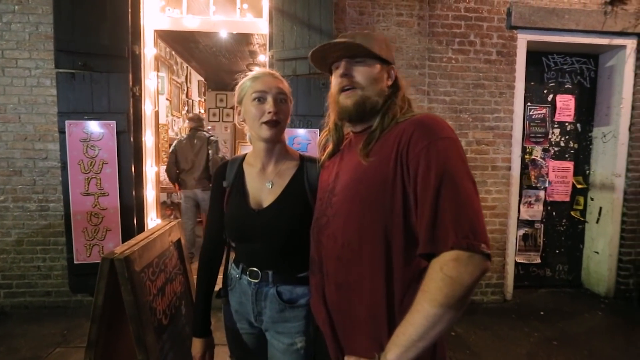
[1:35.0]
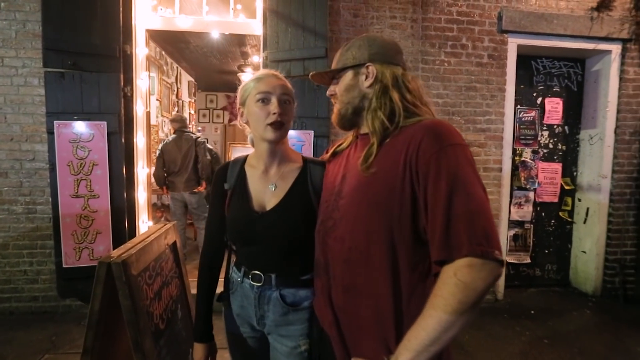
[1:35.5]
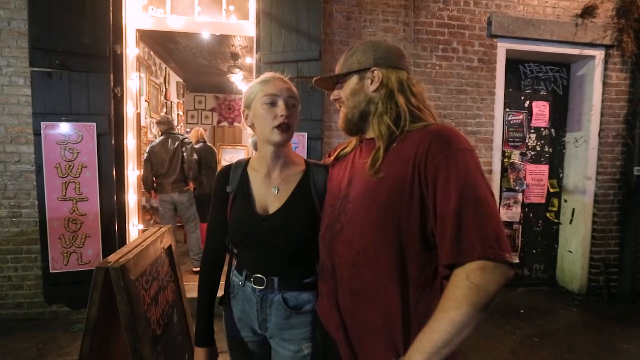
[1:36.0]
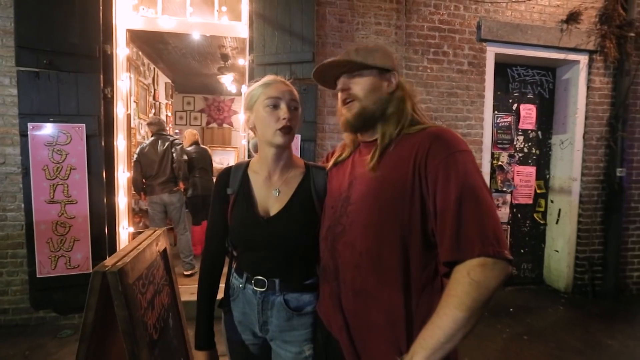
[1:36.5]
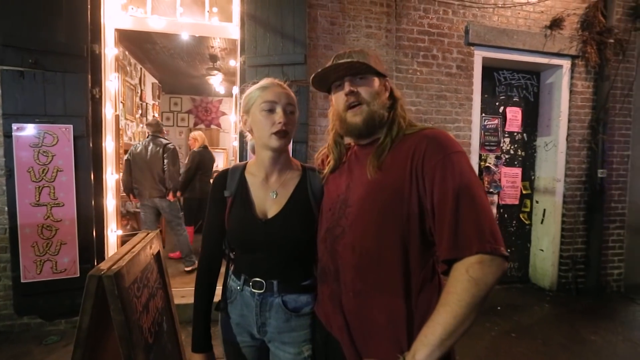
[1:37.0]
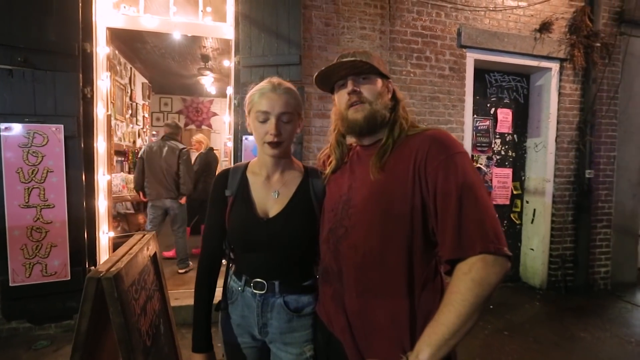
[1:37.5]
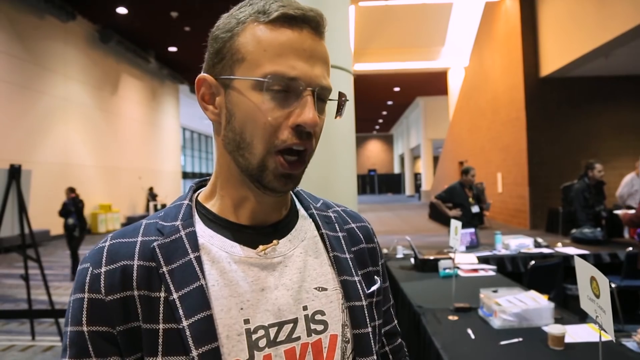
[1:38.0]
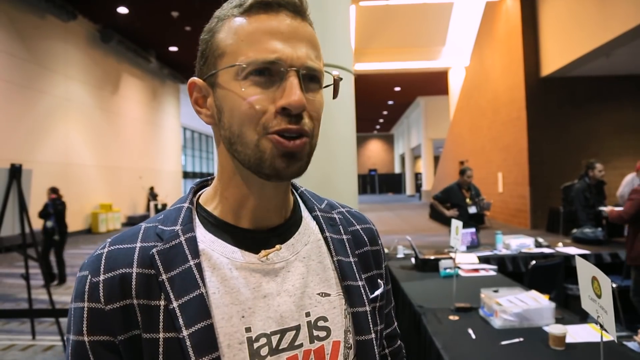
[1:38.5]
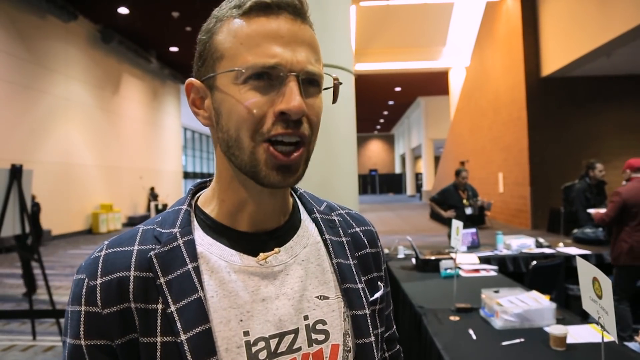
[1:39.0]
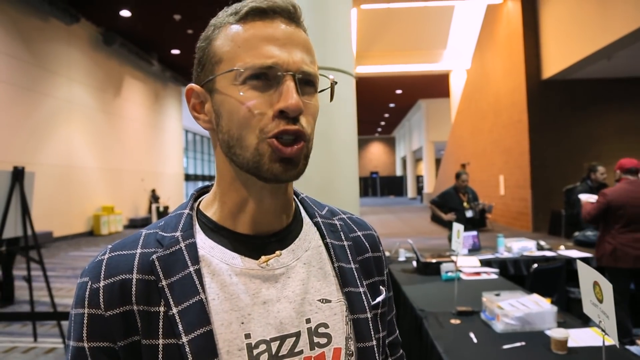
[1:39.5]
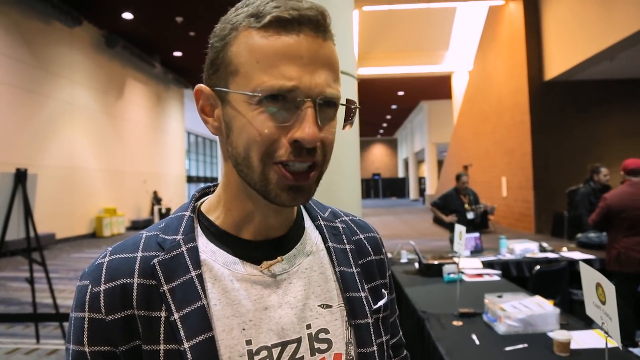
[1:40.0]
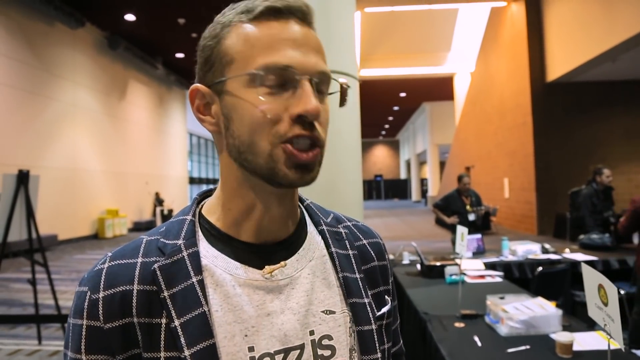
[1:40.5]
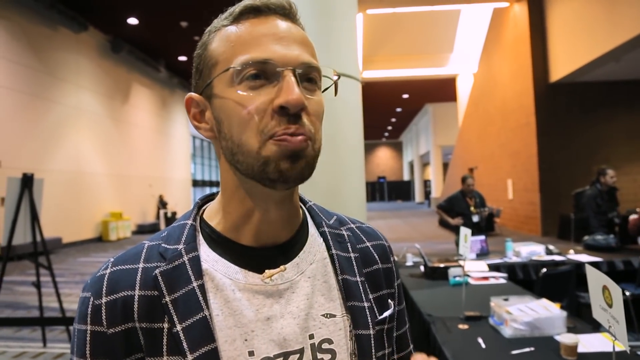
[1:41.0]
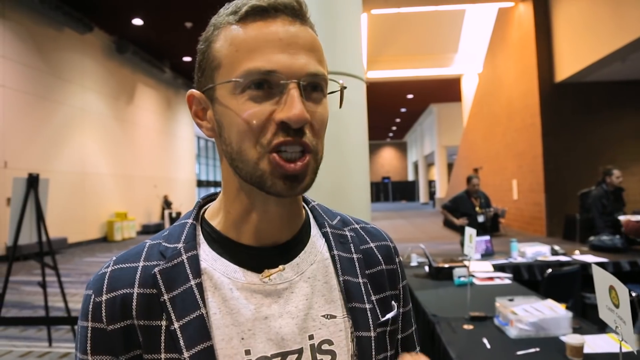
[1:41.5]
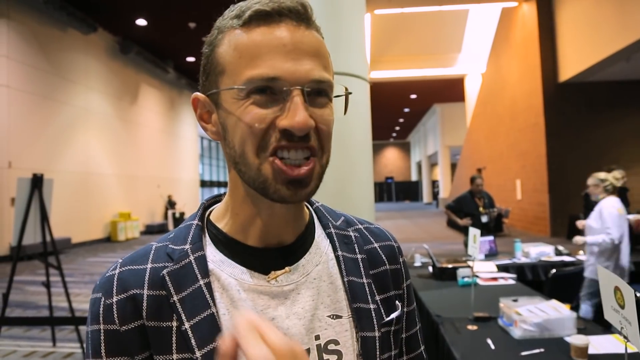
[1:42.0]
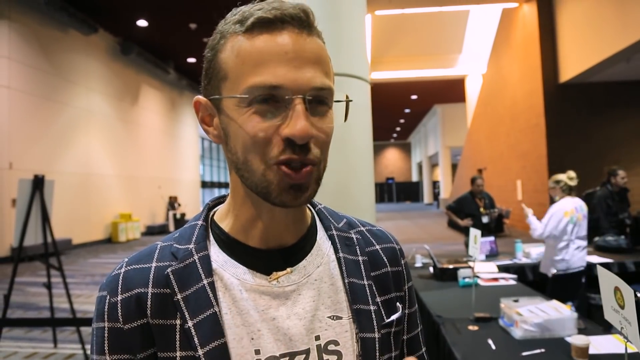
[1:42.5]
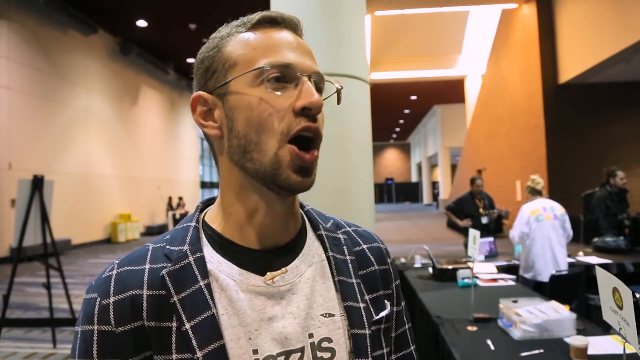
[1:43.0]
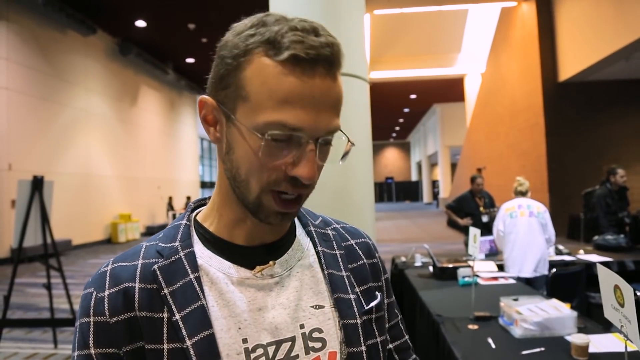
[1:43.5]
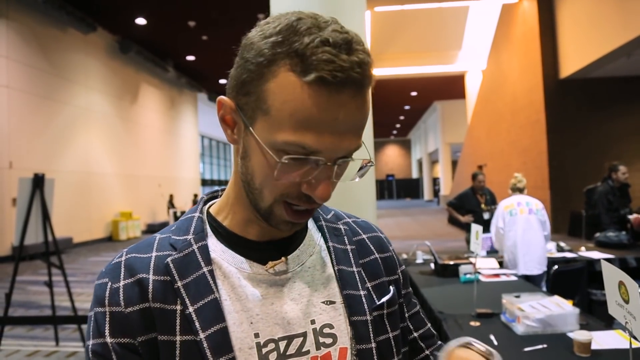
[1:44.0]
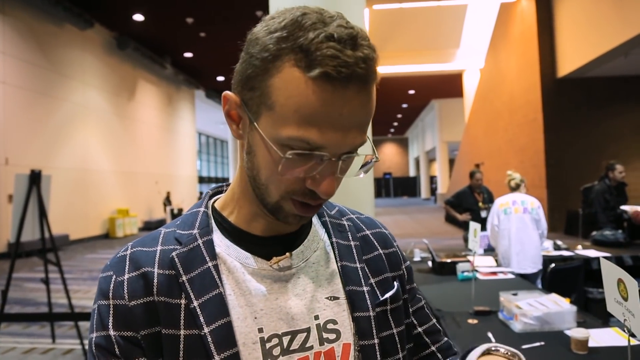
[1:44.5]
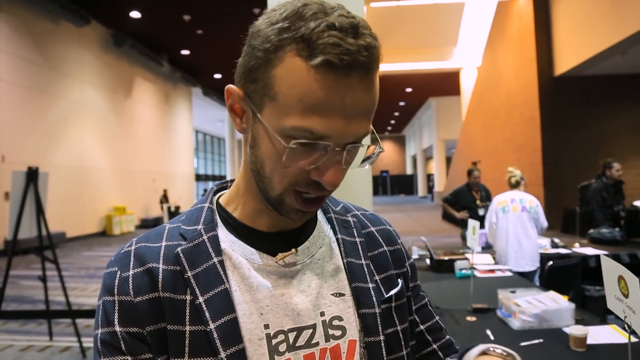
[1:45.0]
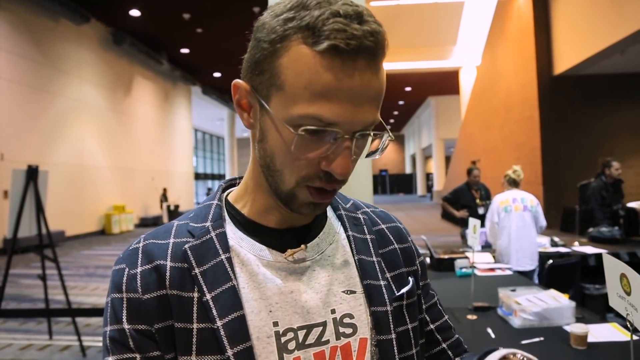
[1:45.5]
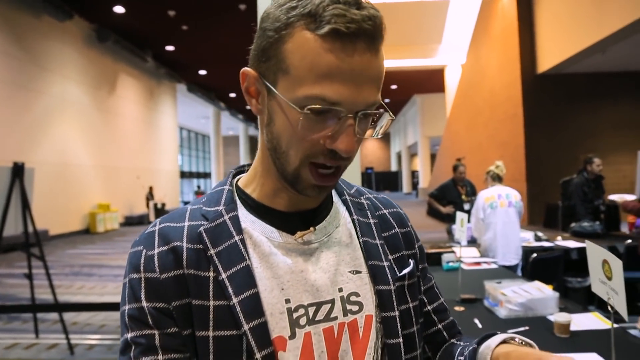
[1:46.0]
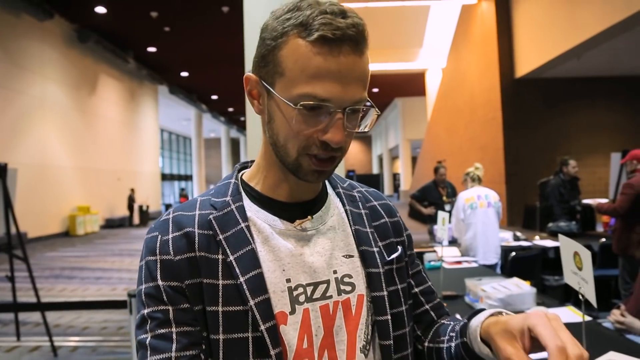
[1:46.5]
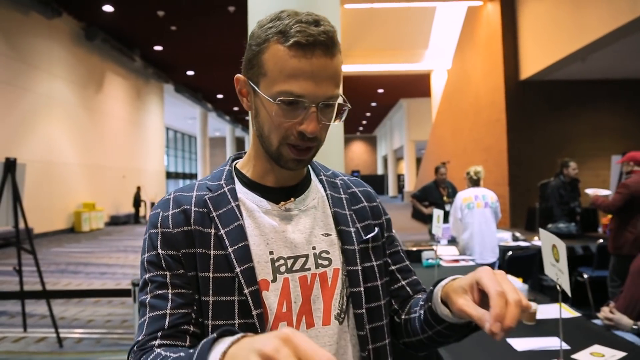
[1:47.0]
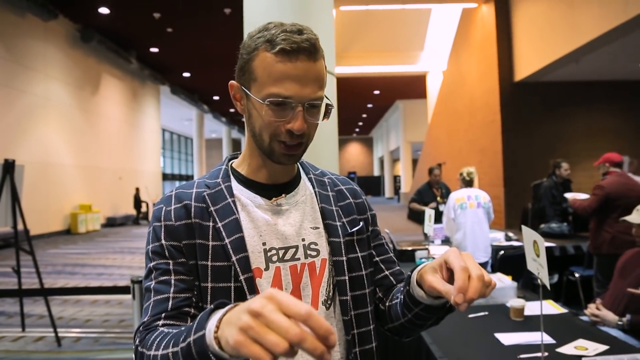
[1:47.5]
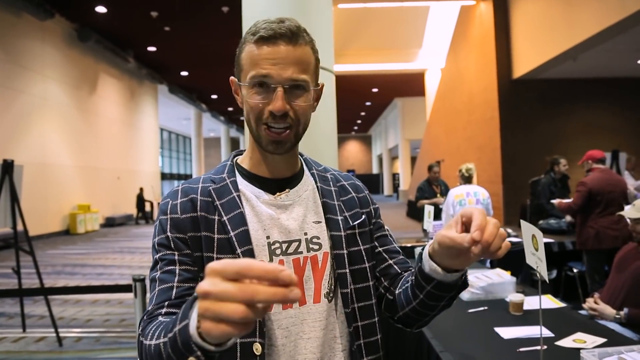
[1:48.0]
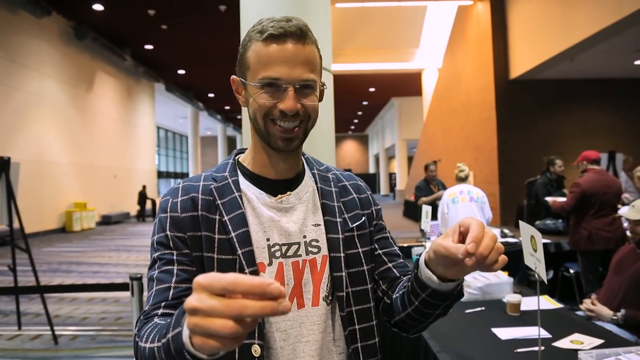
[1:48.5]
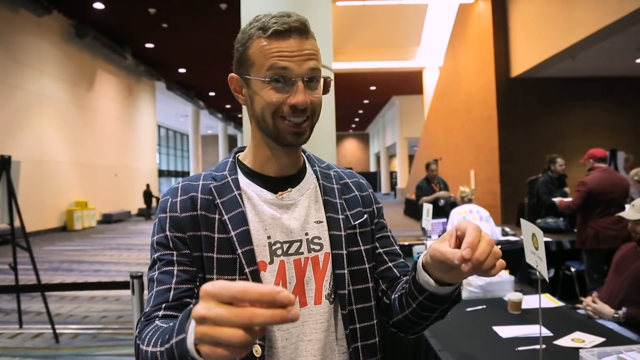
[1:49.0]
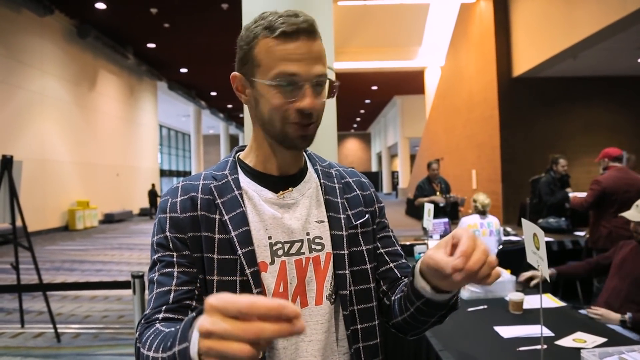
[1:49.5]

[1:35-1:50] A man with a red shirt, longer brown hair, a brown beard and a baseball cap stands arm-in-arm with a woman in a long black shirt, jeans and a black belt, with blonde hair pulled back into a ponytail. They stand in front of a brick building that appears to be an open storefront, well lit, with the door open and people inside, and they talk to the camera. The scene then changes to a man in a t-shirt that says "Jazz is saxy" under an open navy blue and white plaid shirt. He has short brown hair, a short brown beard and mustache, and glasses. He appears to be in some sort of convention center, standing in front of a table and talking to the camera. About three people are in the background: one behind the table and two in front of it, looking like they are receiving information. When the camera pulls out, another woman is walking down the hallway and another man is behind the tables. The tables are covered in black cloth and have various signs and papers on them.